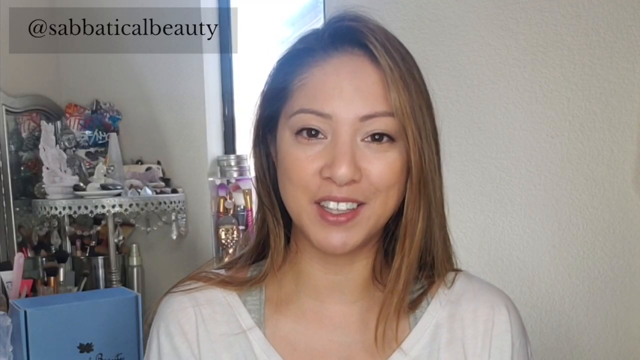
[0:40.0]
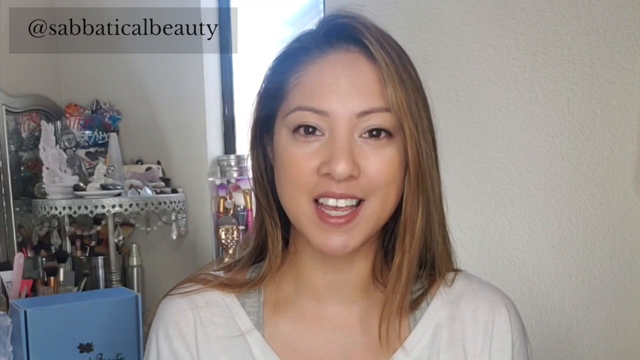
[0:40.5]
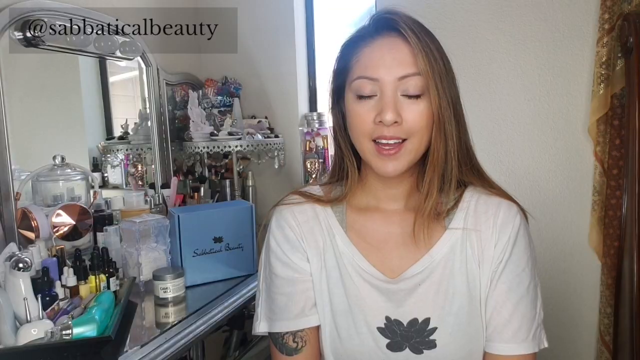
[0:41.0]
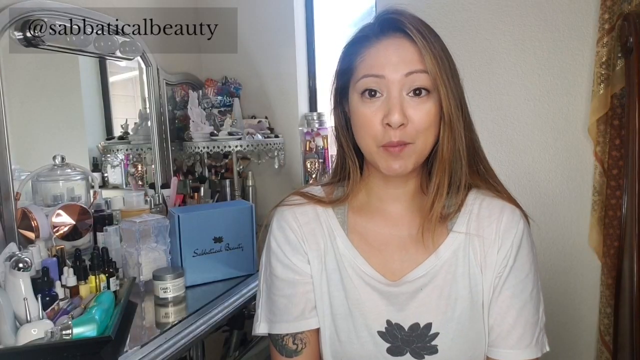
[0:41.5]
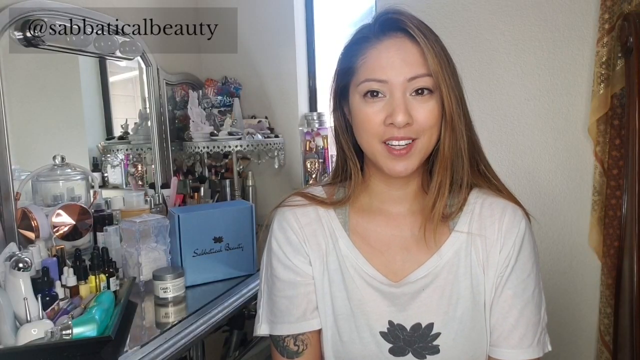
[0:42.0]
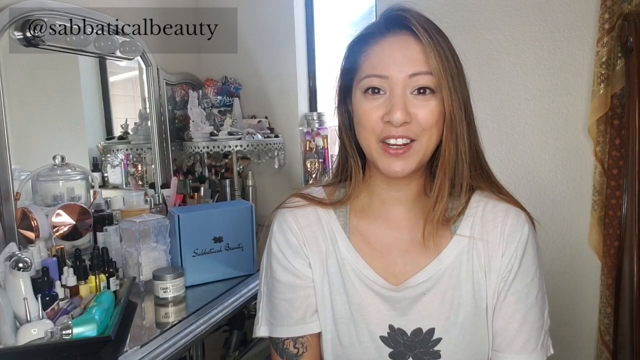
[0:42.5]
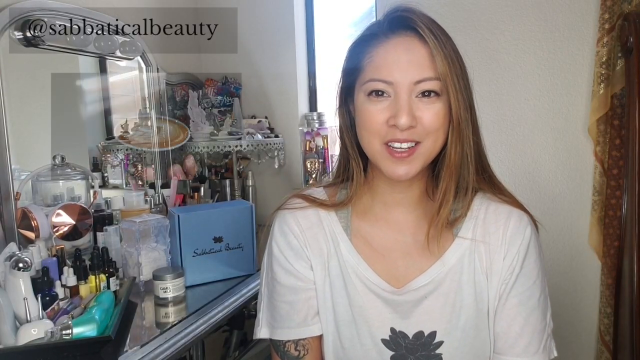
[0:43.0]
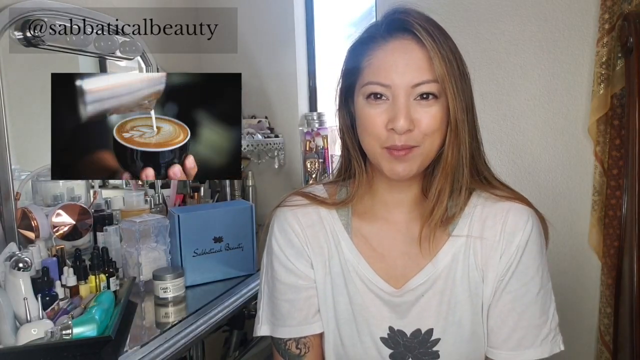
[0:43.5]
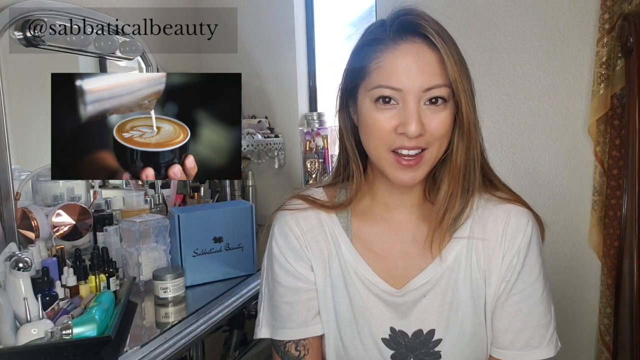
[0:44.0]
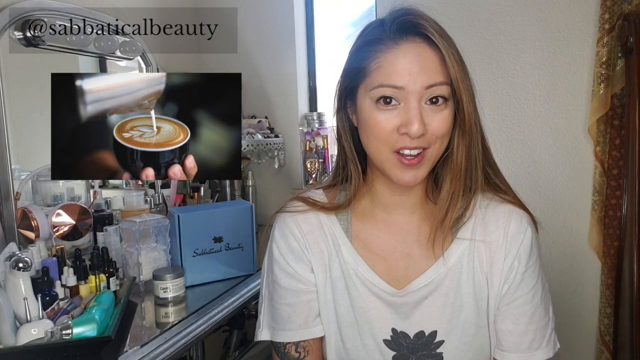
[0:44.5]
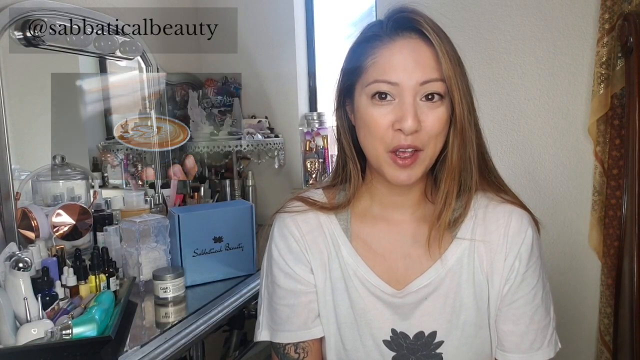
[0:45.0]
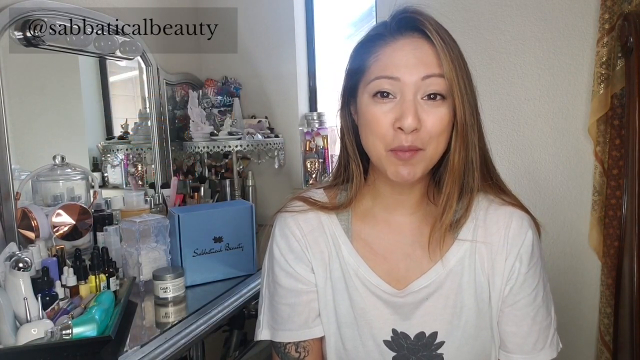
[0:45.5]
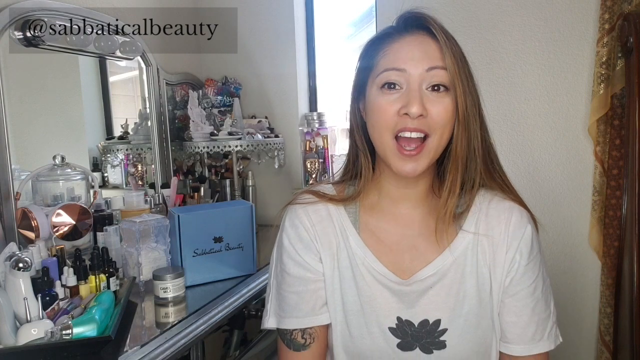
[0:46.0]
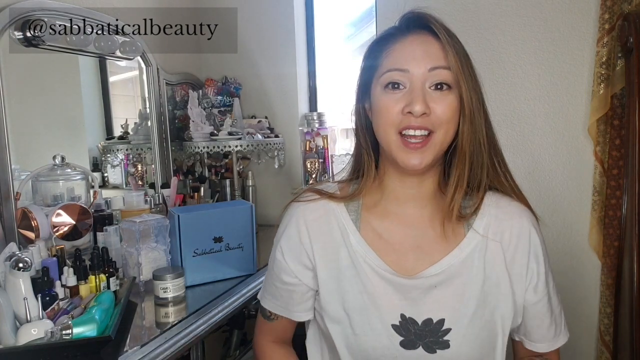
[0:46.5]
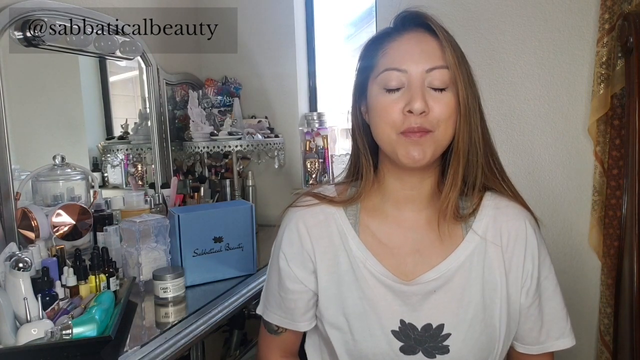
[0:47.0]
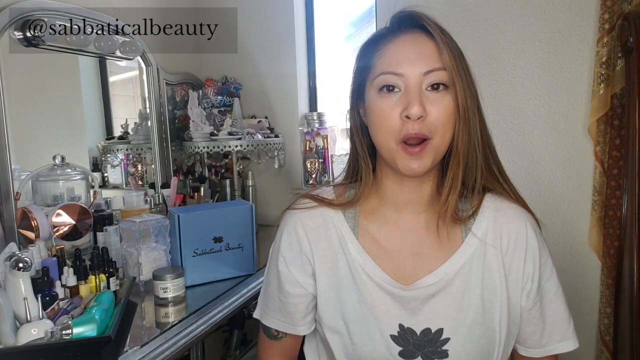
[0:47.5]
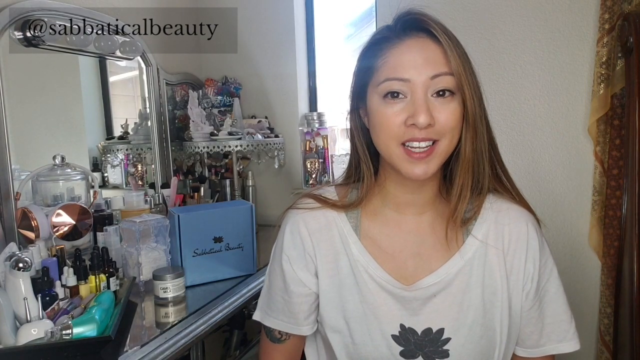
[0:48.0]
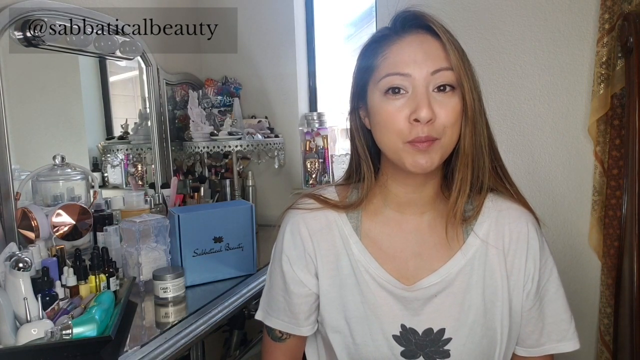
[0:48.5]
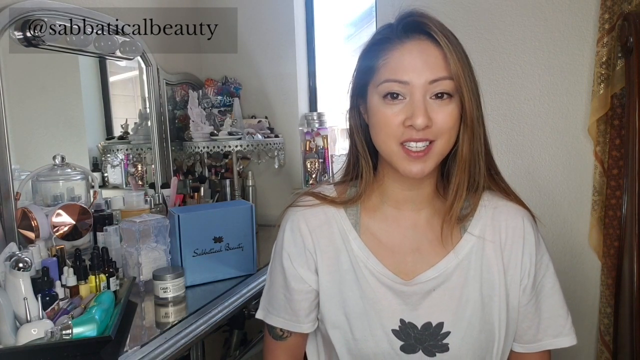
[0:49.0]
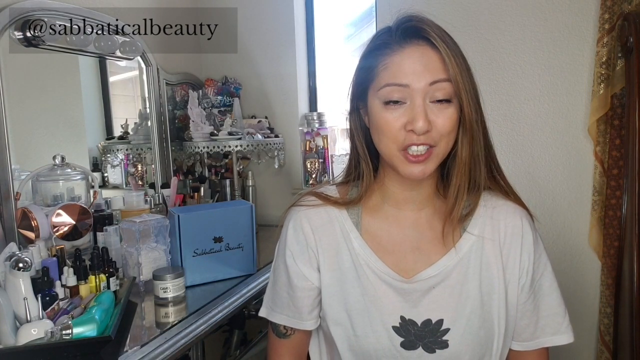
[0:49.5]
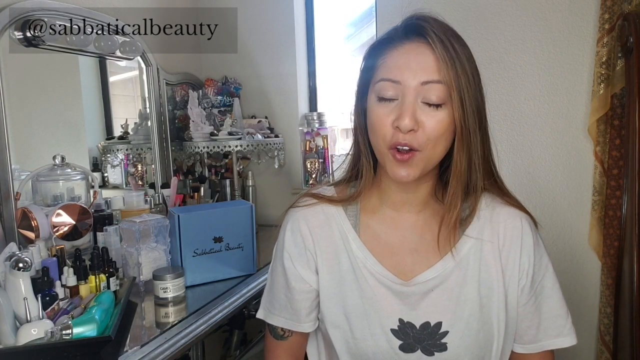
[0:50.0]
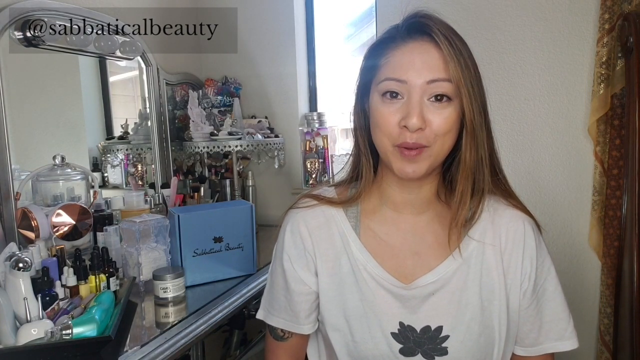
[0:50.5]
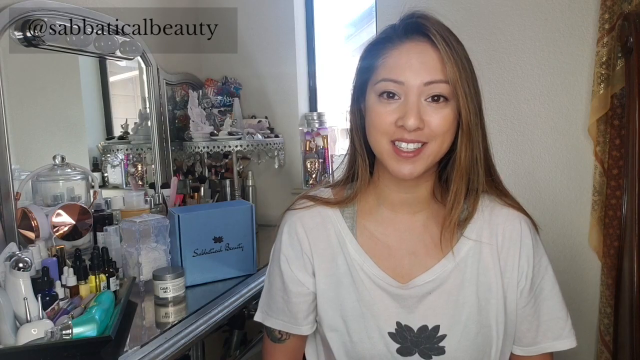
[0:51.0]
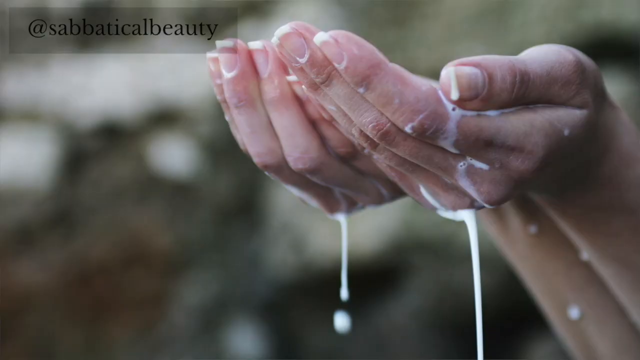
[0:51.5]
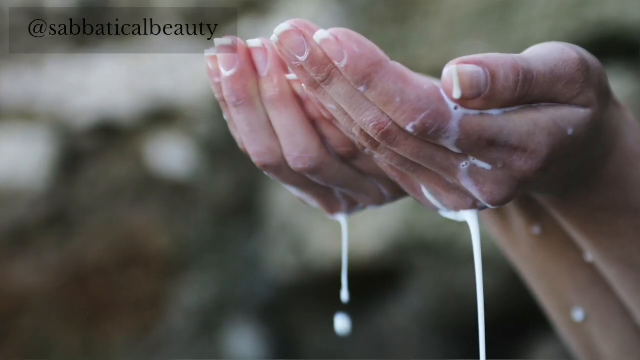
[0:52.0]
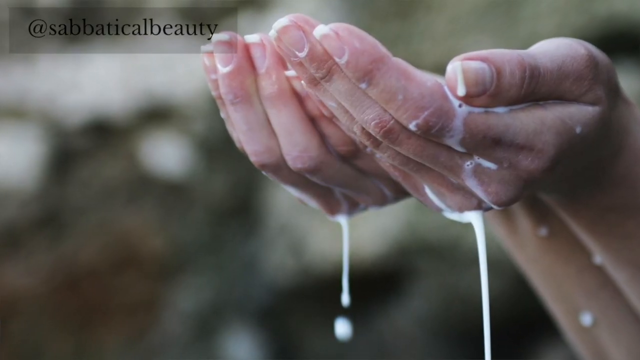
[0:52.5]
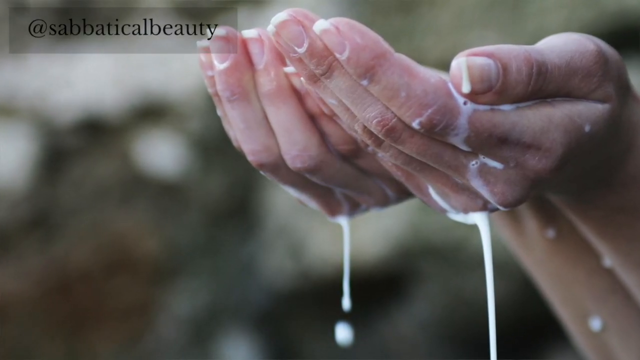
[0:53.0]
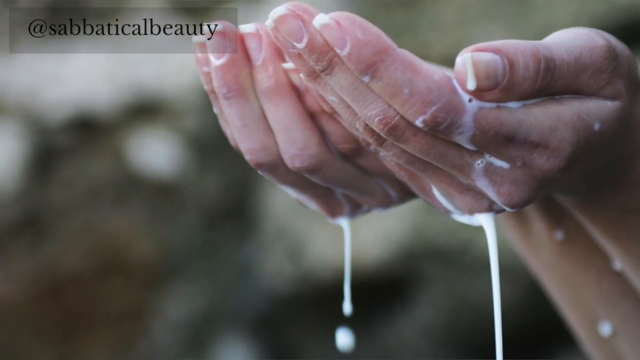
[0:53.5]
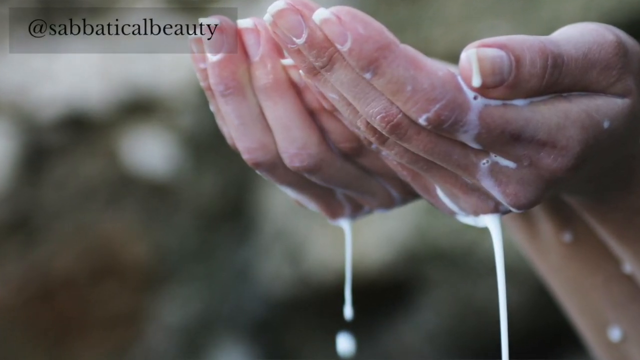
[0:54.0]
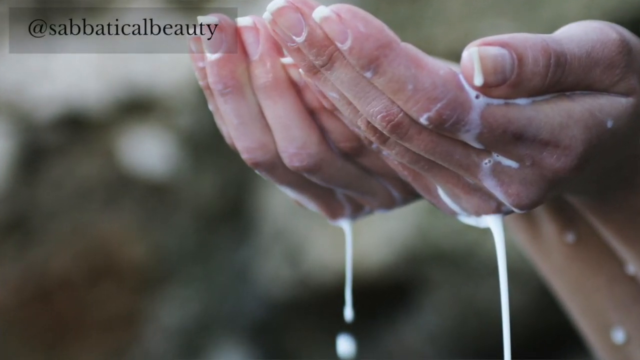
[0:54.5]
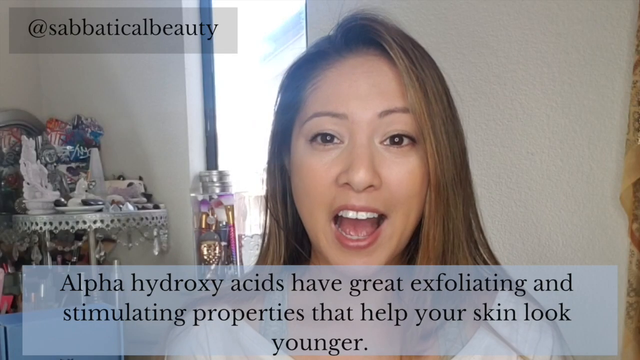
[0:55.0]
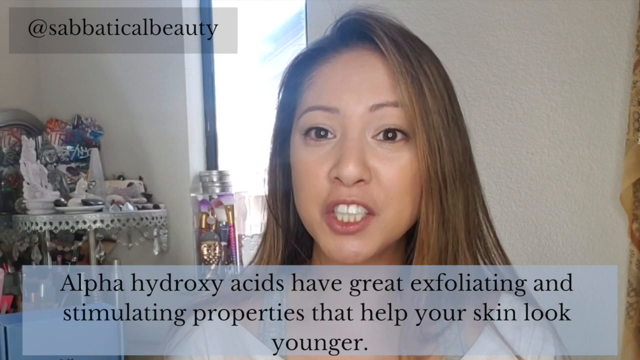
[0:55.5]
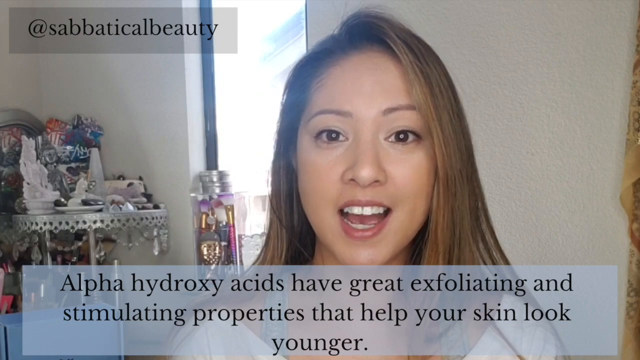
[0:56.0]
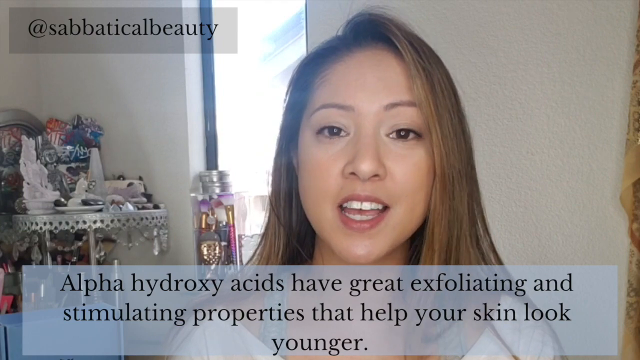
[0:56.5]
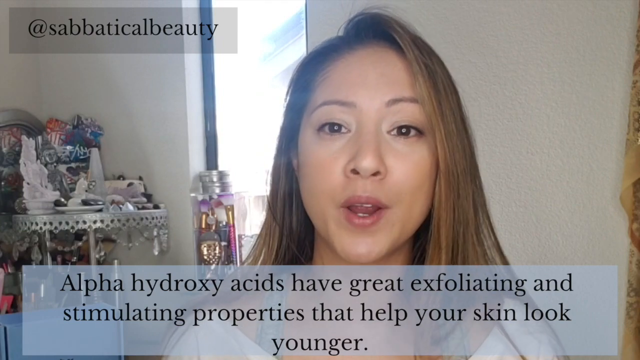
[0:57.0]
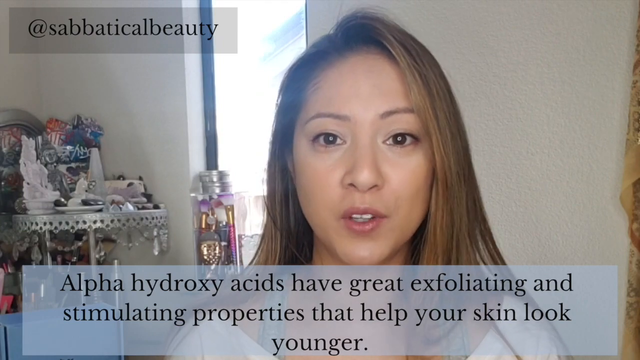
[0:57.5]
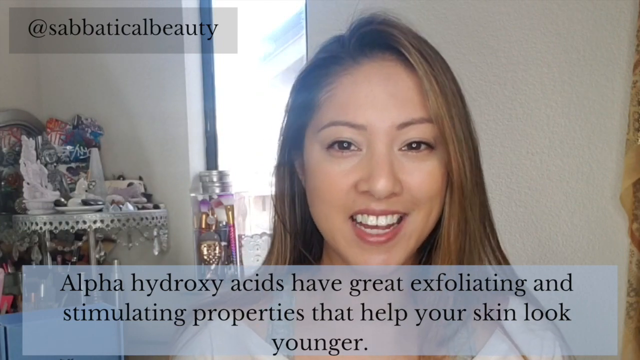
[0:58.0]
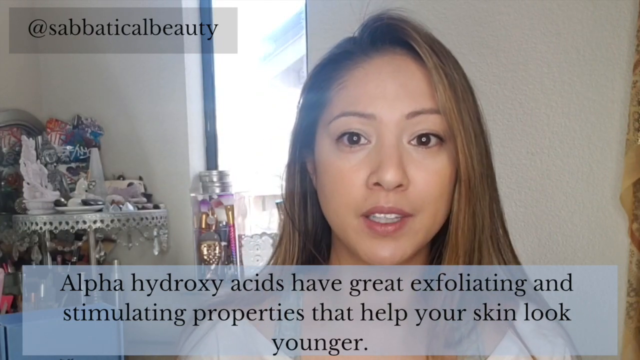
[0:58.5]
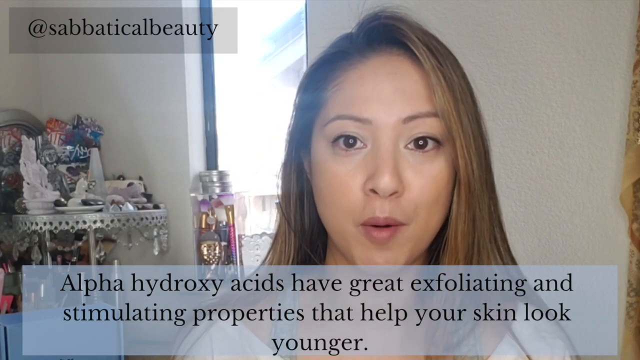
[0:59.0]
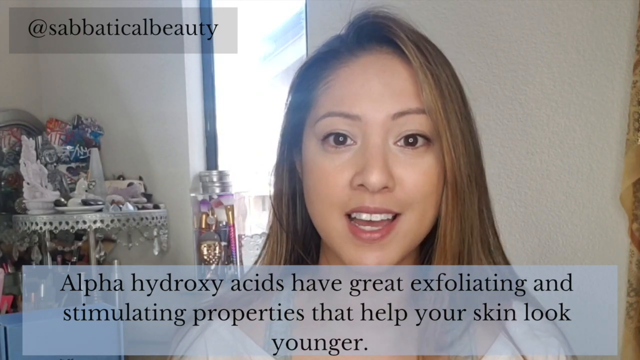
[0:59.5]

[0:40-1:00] The woman, in a white t-shirt, displays a few things such as coffee on the screen; the background looks quite white. Hands appear: a person washes their hands and seems about to wash their face with something that looks watery and milky, and the nails are visible. On-screen text about alpha acids mentions "exfoliating" and "properties that help your skin".